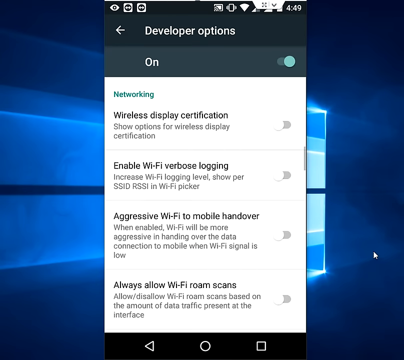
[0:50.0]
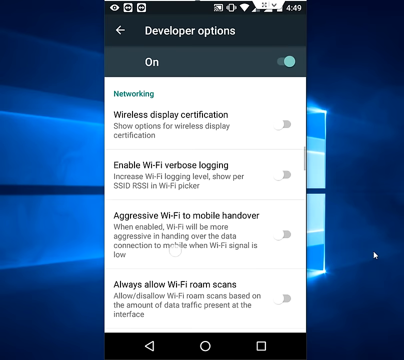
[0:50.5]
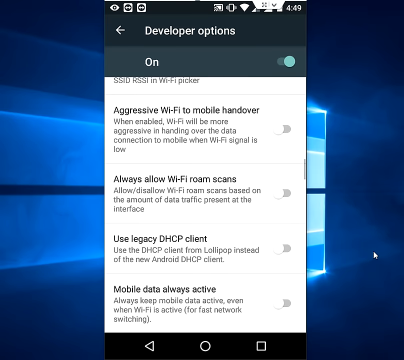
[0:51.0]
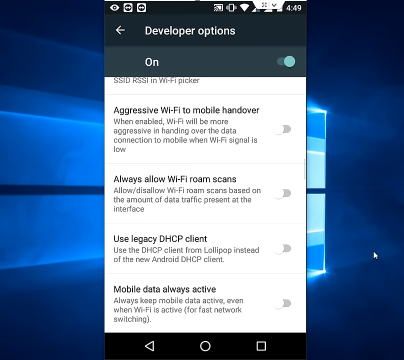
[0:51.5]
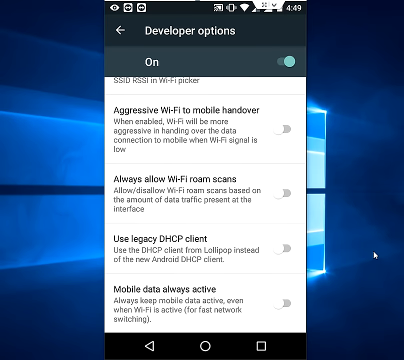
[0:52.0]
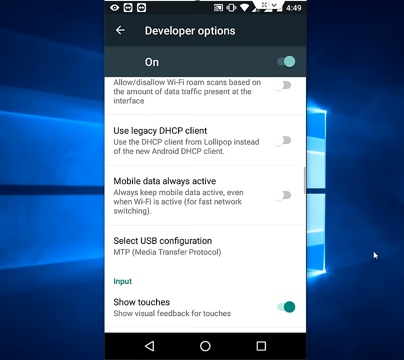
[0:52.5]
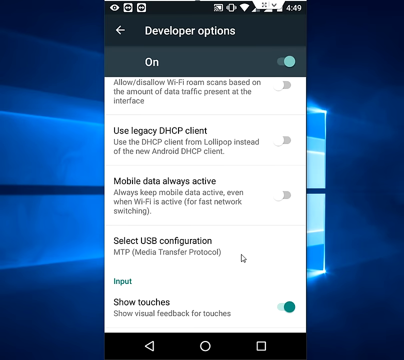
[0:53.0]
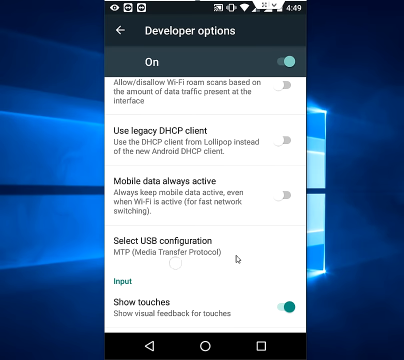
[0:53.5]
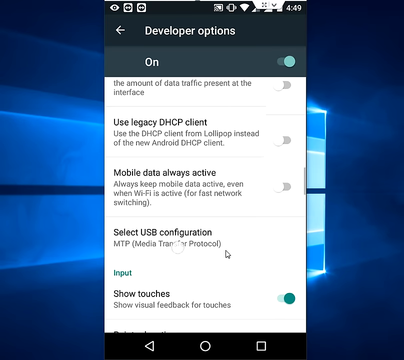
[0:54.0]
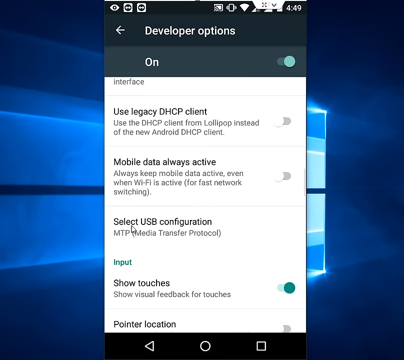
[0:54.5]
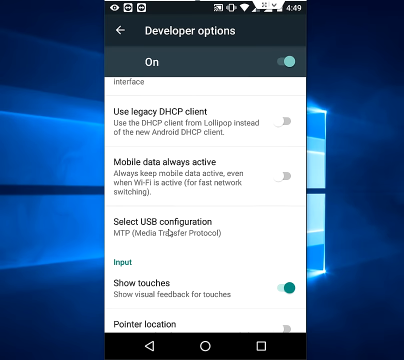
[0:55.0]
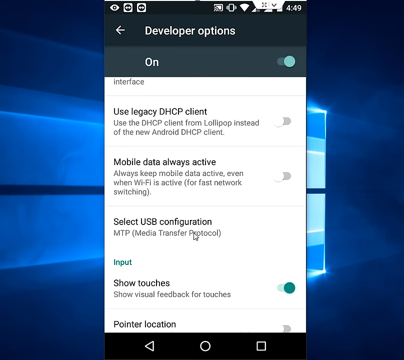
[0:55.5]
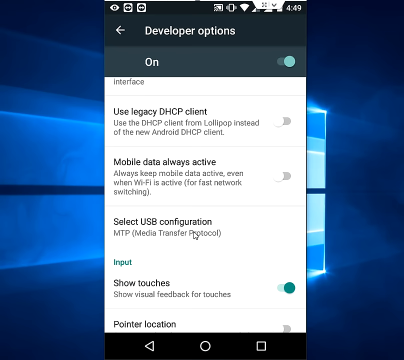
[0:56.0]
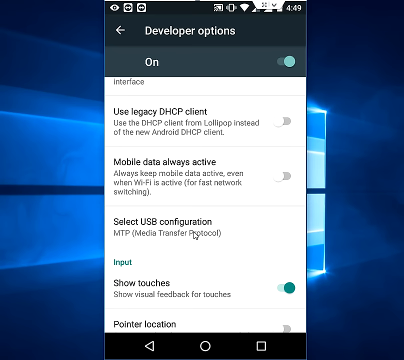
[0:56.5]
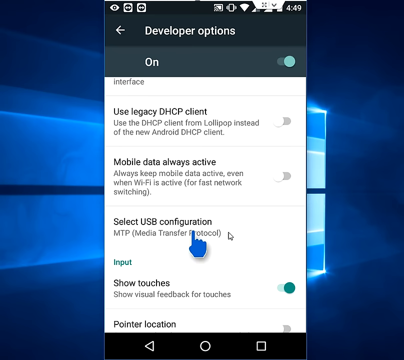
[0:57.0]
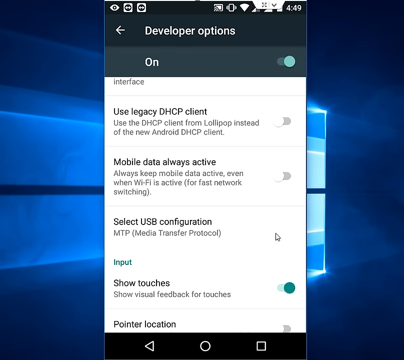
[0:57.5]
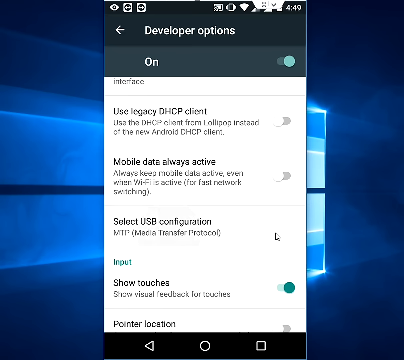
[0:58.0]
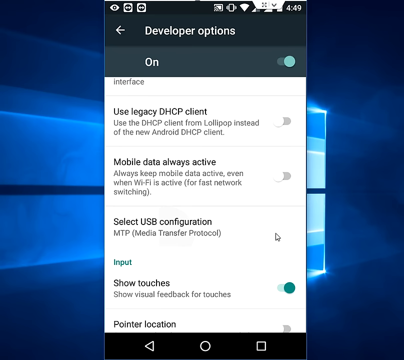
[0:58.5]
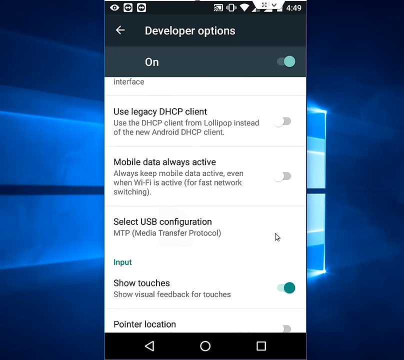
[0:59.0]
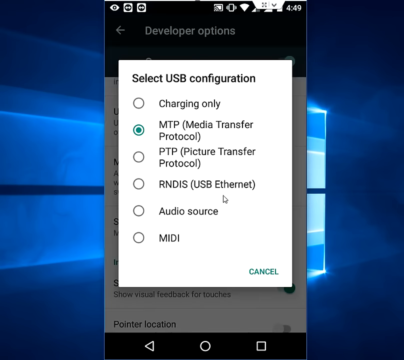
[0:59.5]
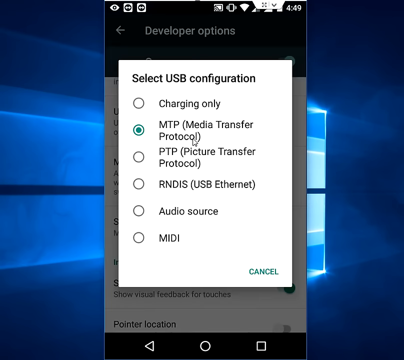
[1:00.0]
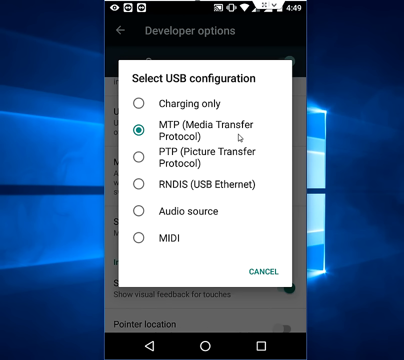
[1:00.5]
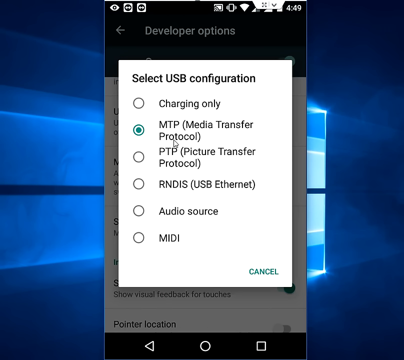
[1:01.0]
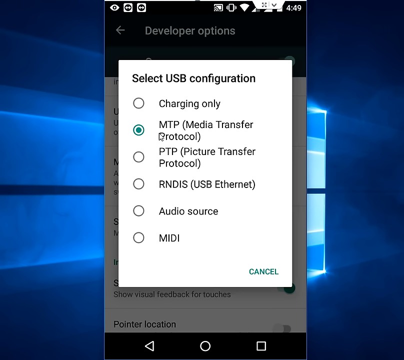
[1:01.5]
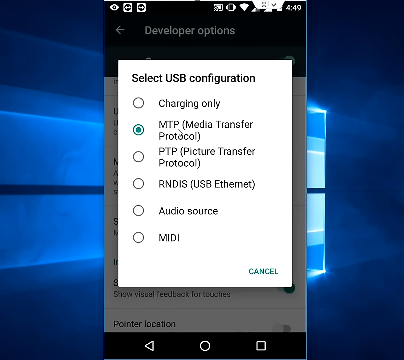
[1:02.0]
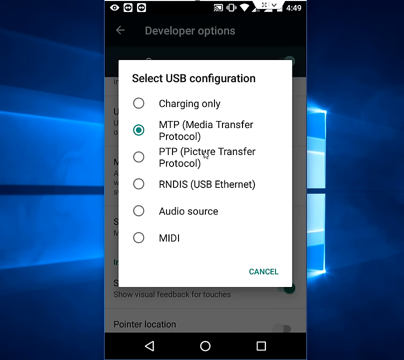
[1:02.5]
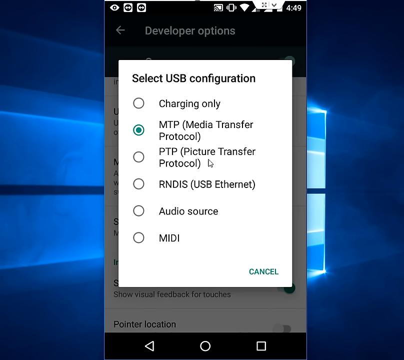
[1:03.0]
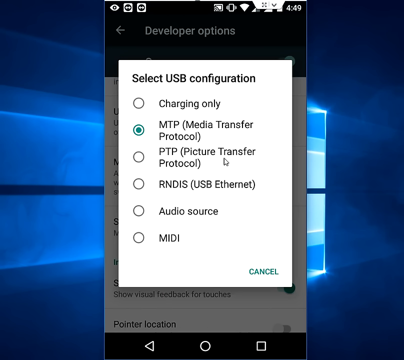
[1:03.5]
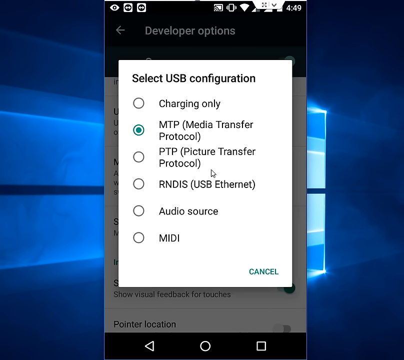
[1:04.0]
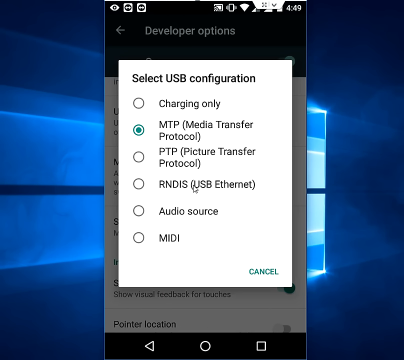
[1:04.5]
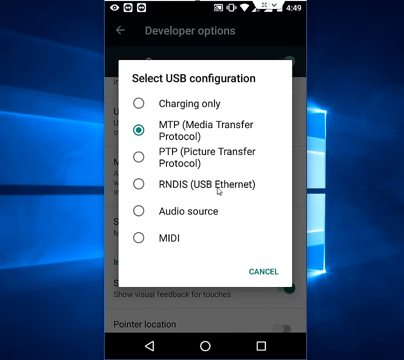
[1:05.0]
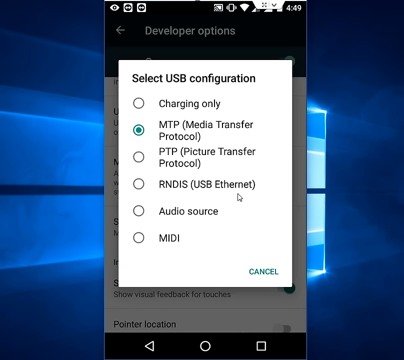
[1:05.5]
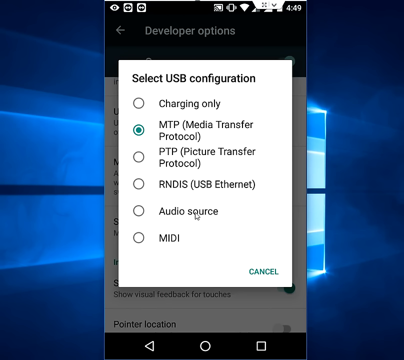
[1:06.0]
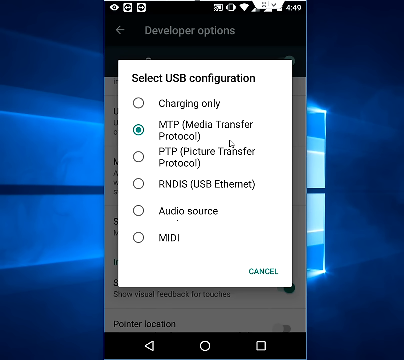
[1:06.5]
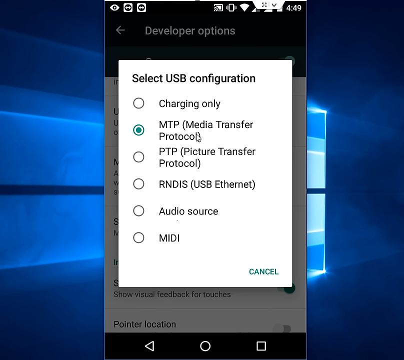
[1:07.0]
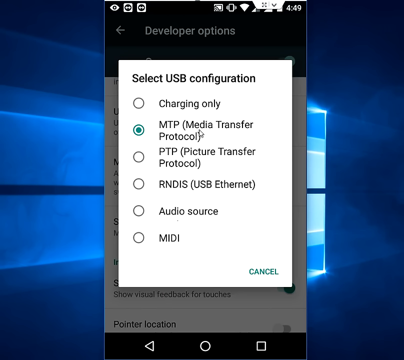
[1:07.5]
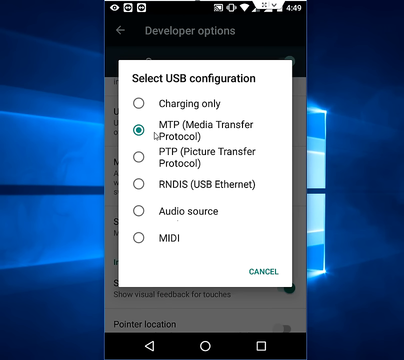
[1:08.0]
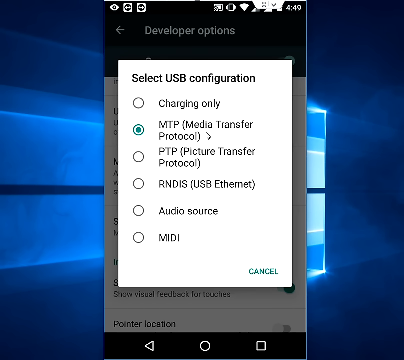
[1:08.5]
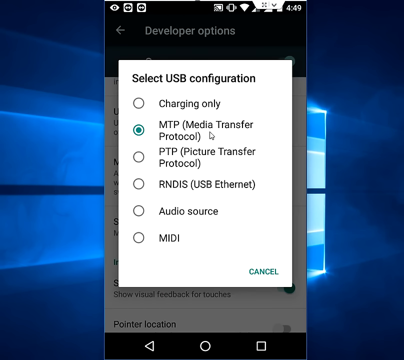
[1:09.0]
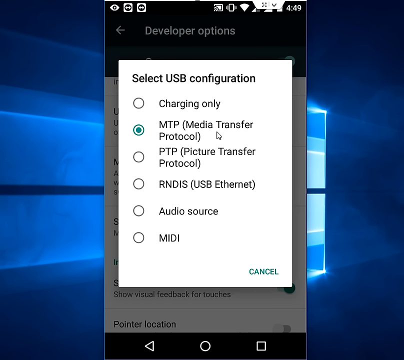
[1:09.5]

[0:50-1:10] The view moves down the screen, showing use legacy DHCP client and mobile data always active, both grayed out and not selected. Select USB configuration shows MTP, media transfer protocol. Under input, show touches, which shows visual feedback for touches, is switched on, with the dot moved to the right and in teal. The user selects the USB configuration and clicks on MTP media transfer protocol, moving the pointer over that option and then away from it, over the other selections on the page: PTP picture transfer protocol, RNDIS USB Ethernet, audio source, and charging only. After going through each option, the MTP option remains selected.